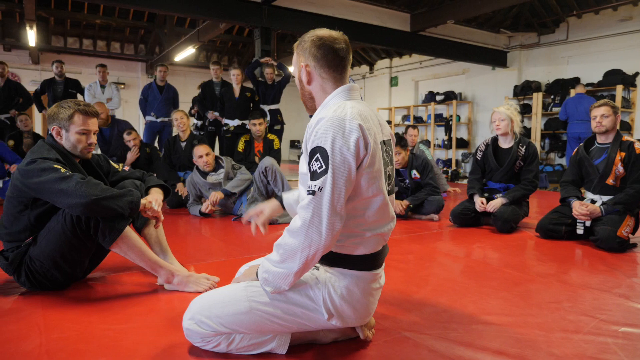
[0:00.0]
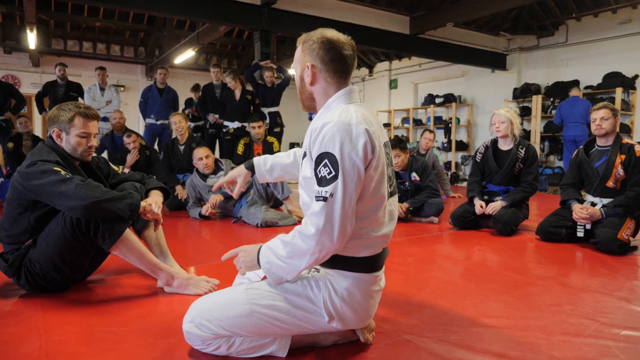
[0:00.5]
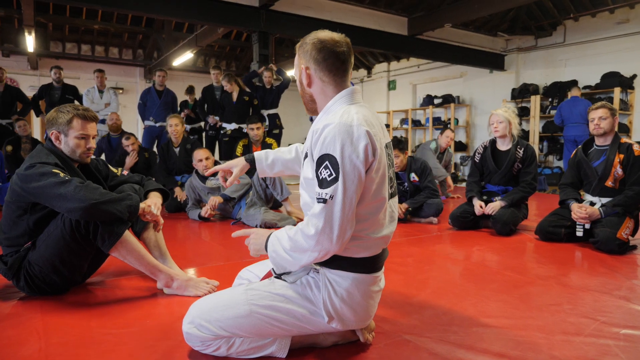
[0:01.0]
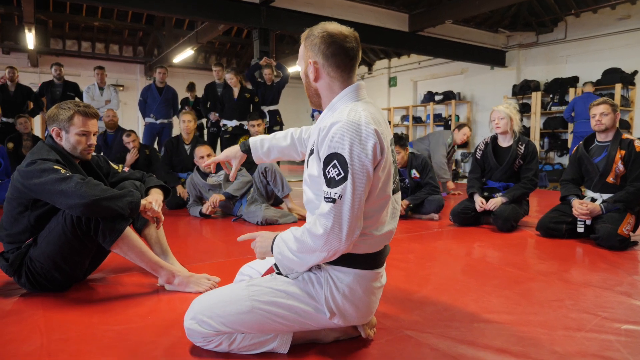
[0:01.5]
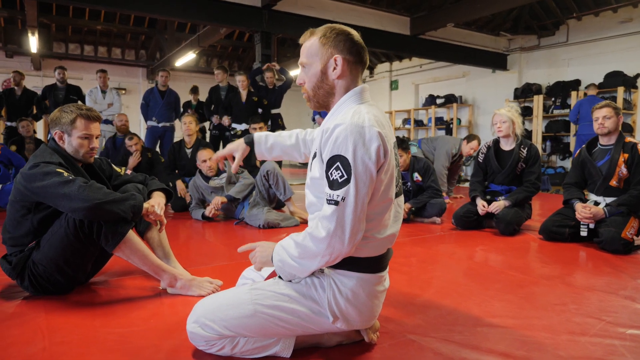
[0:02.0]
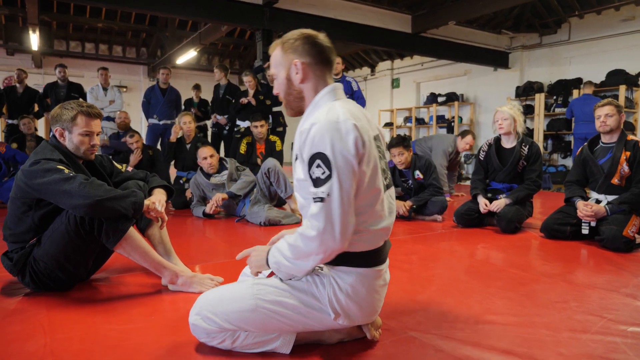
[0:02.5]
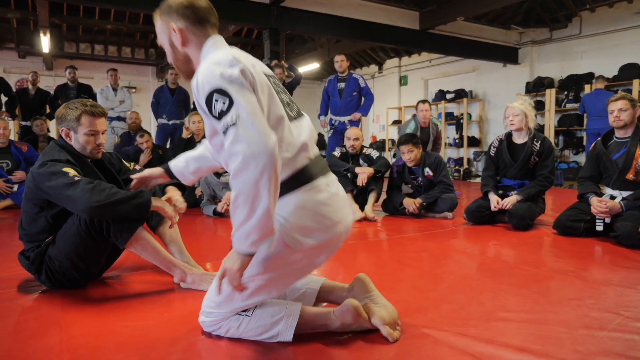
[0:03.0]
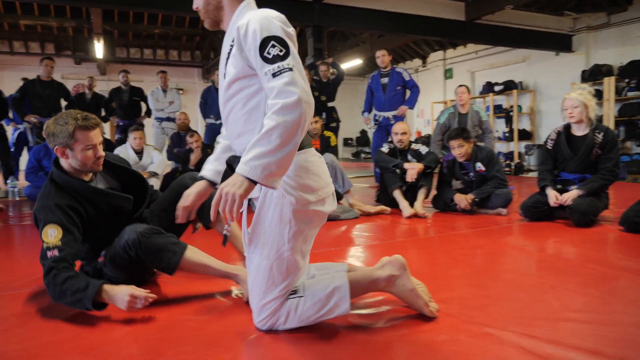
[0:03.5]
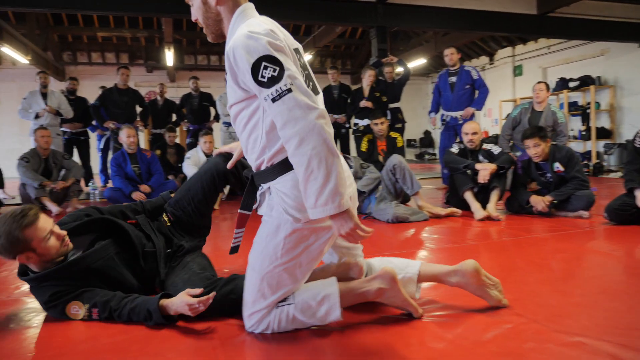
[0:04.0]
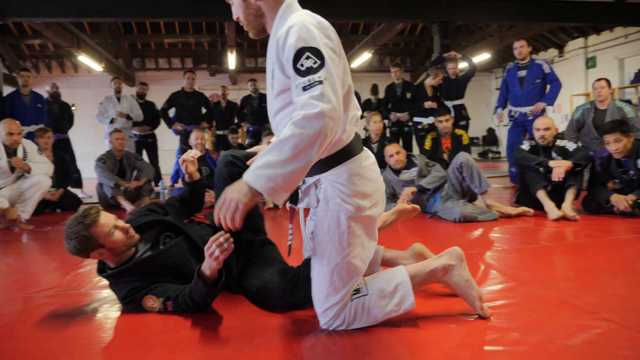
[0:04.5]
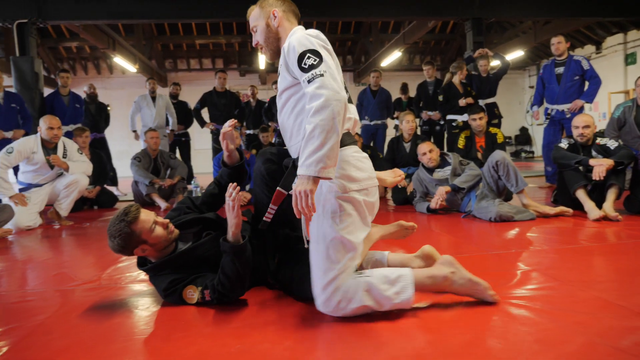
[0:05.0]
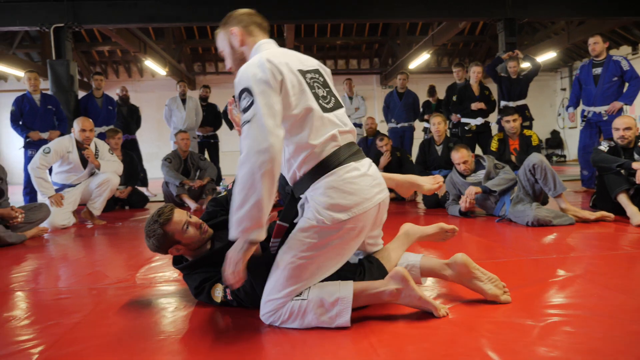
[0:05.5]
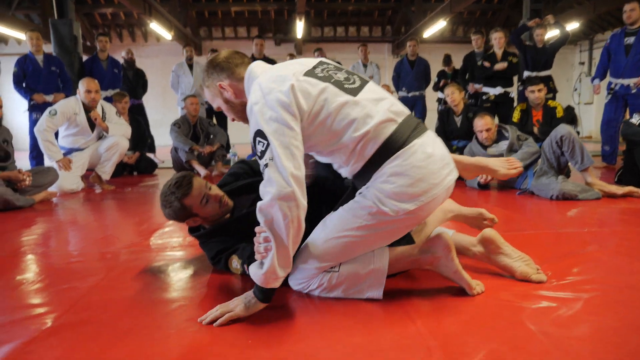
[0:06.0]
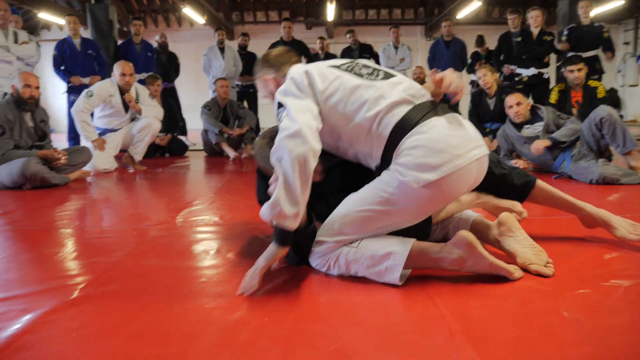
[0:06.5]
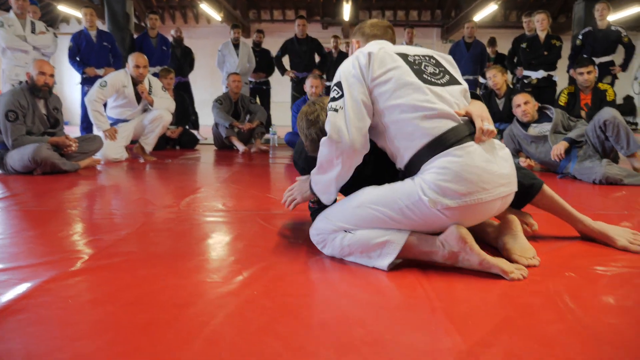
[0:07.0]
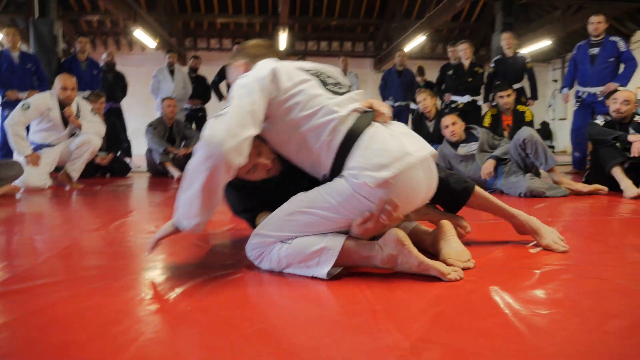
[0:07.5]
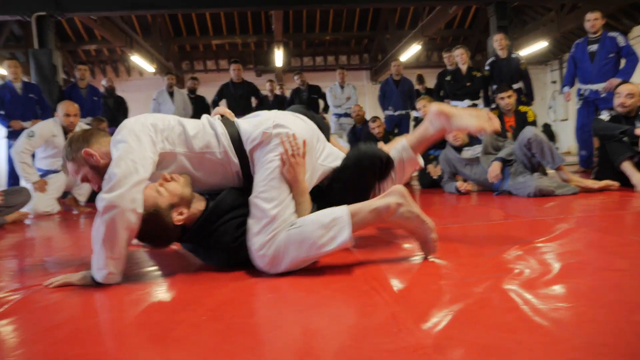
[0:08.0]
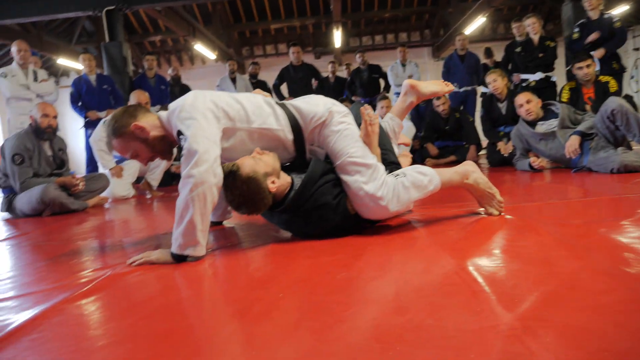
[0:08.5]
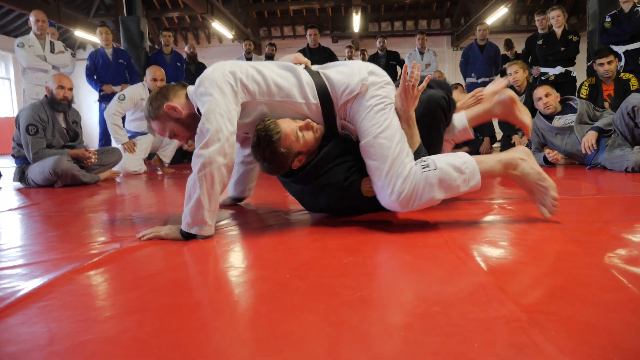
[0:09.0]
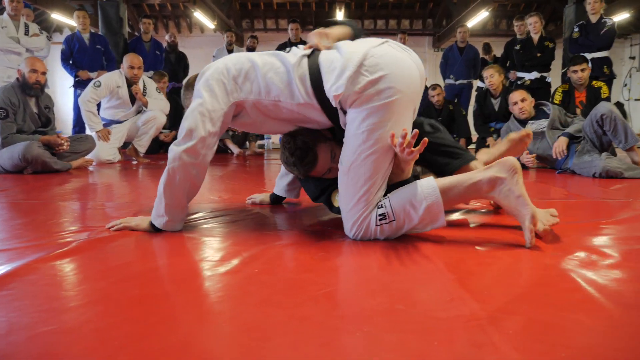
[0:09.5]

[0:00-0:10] The video opens in what looks like a place where people learn karate. A circle of men and women in black karate suits, on their knees or cross-legged, watch two people in the center, one in a white karate jumpsuit and one in a black one. The man in white appears to be instructing the others, at first using his hands to indicate what needs to be done. Then the man in black goes down on his back and the man in white covers him; it looks like they are doing Brazilian Jiu Jitsu. The man in black, with his arms wrapped around the other man's leg, tries to turn the man in white over.